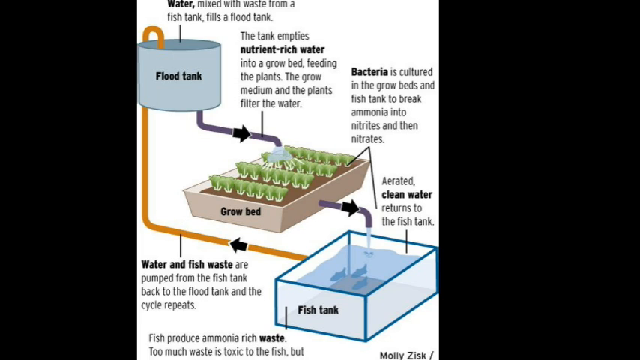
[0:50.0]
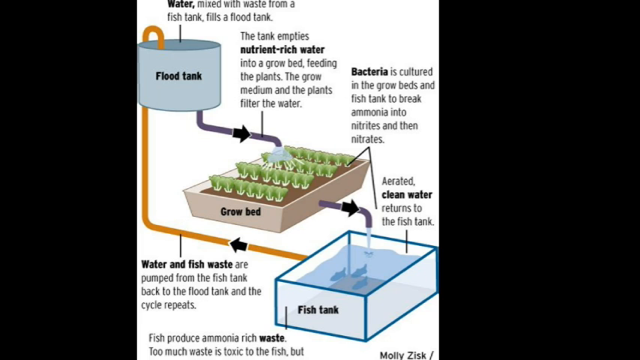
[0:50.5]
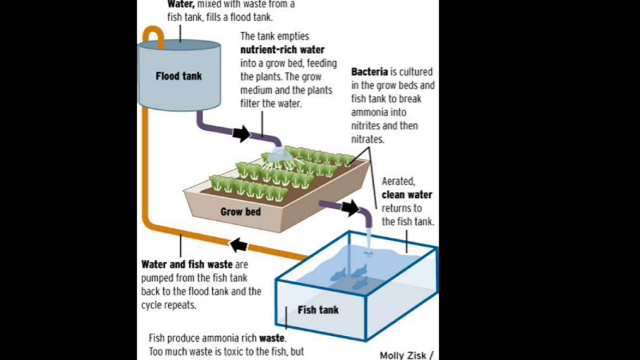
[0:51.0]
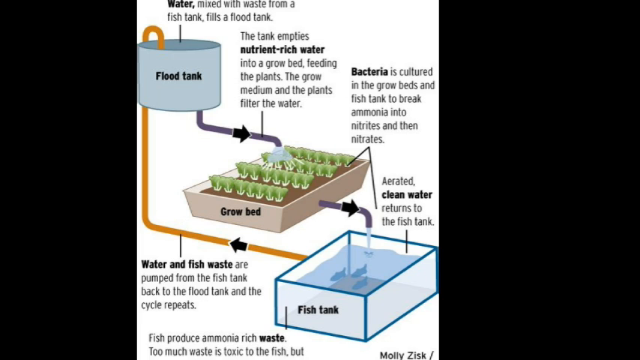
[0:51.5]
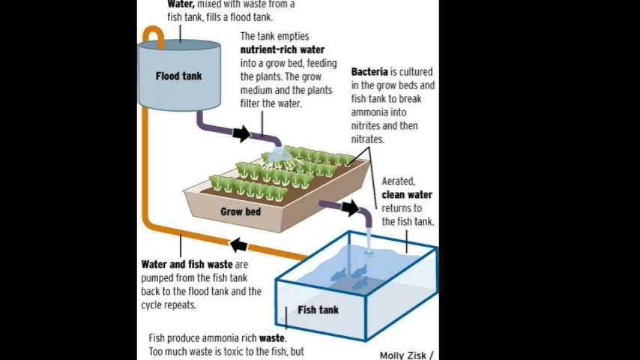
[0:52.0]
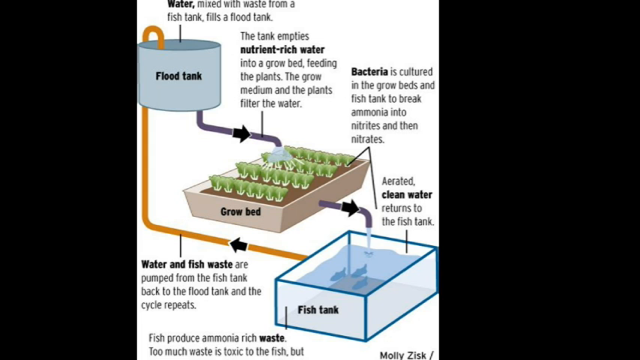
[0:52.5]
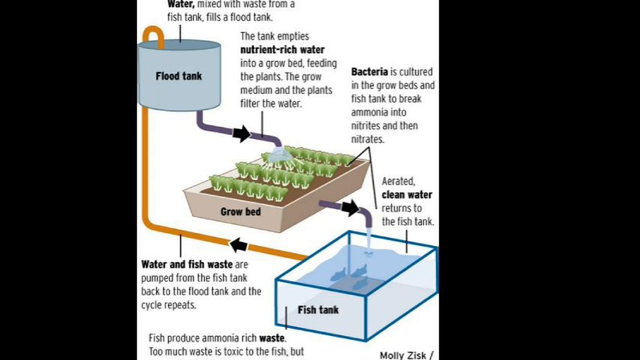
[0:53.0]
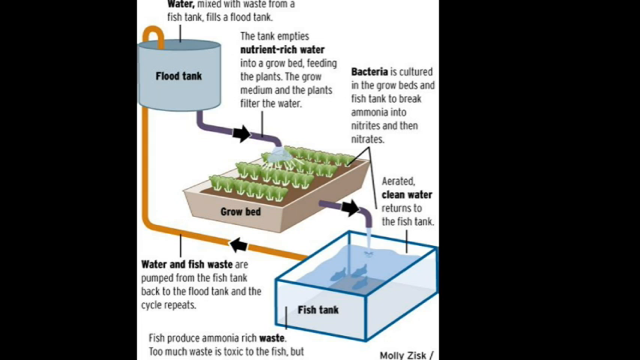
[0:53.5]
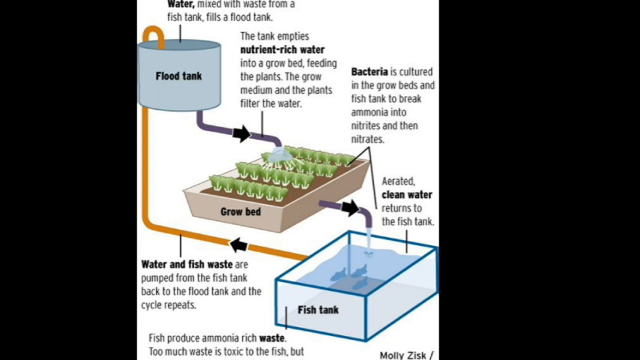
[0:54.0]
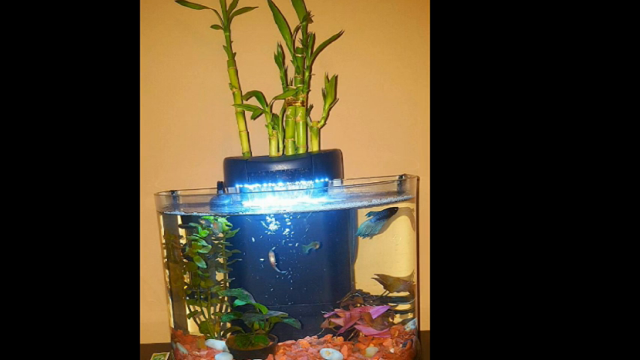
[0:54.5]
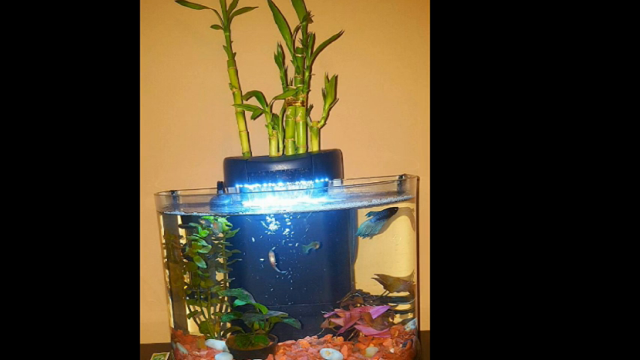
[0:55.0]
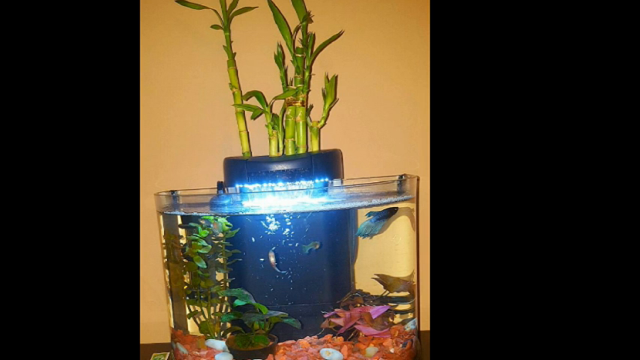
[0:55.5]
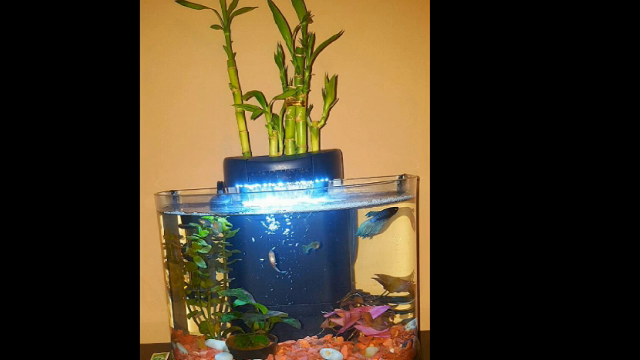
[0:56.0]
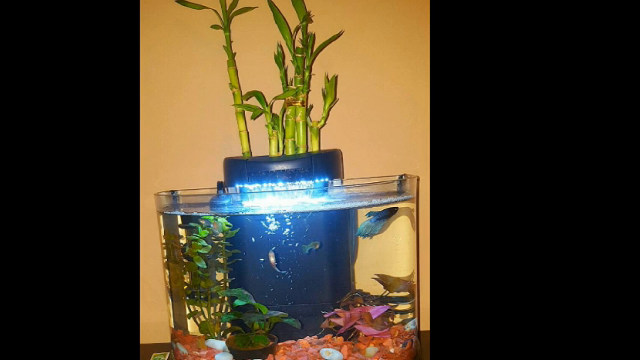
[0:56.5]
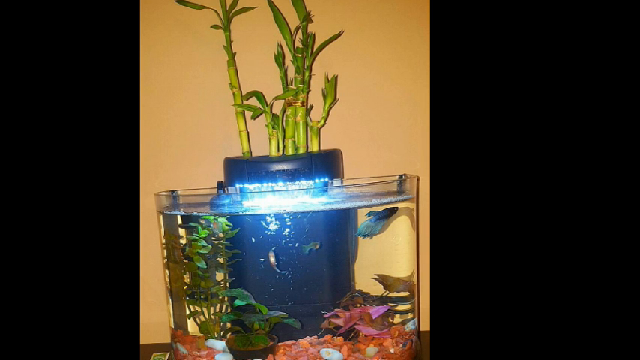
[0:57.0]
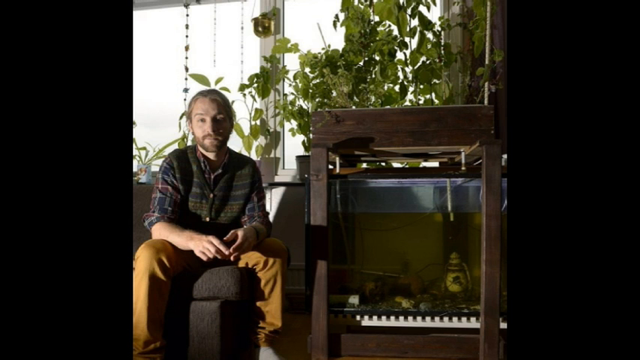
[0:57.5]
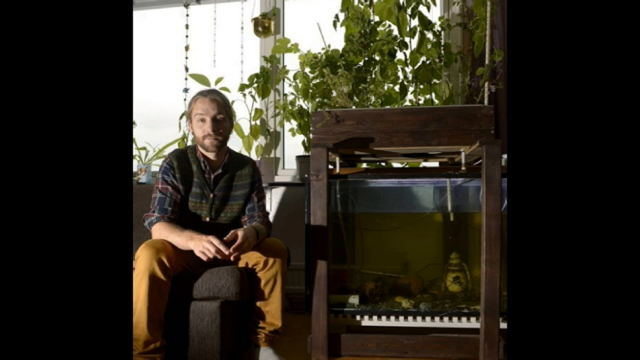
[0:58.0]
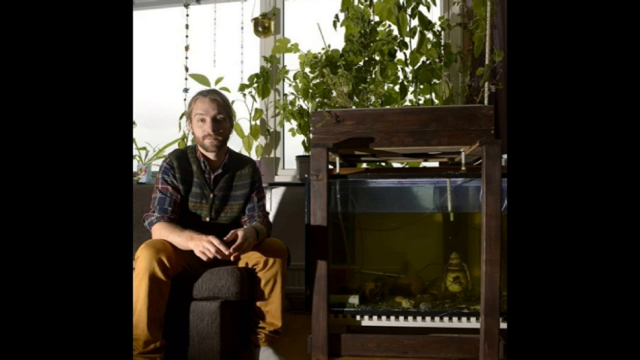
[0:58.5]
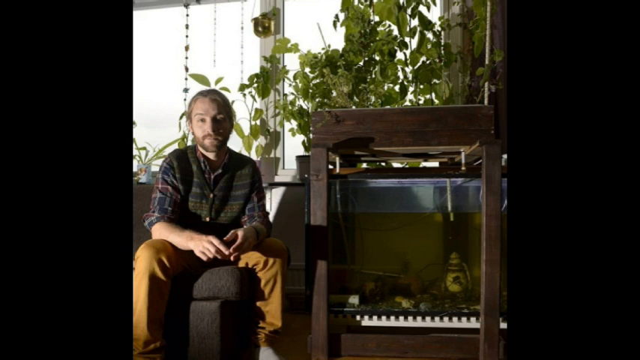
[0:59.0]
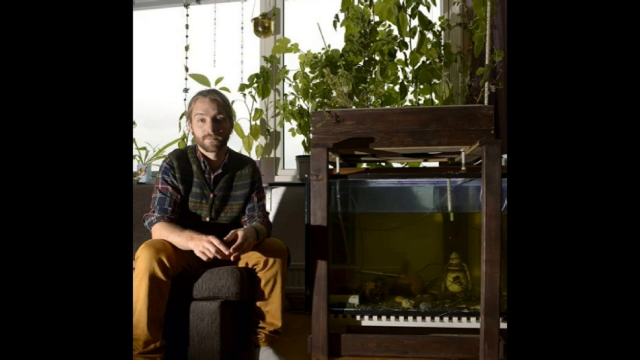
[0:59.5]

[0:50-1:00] A diagram of an aquaponic system shows a fish tank creating nutrient-rich water, which can be toxic to the fish because of too much ammonia but is good for the plants. The water goes into a flood tank that feeds the plants, and the plants filter and clean the water for the fish. After briefly showing the diagram, the video flips to a picture of a beta tank with a bamboo plant growing behind the fish tank; it looks like water is pumped into the bamboo plant and then flows out of it into the small fish tank. Next comes a picture of a gentleman with what appears to be a large fish tank with lots of plants growing attached to it.